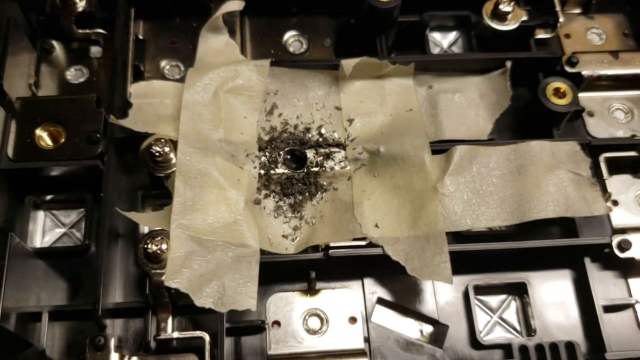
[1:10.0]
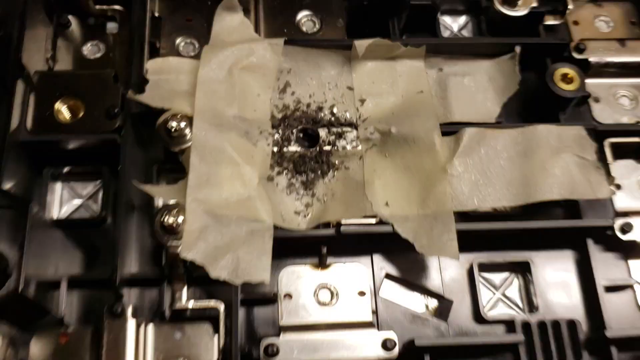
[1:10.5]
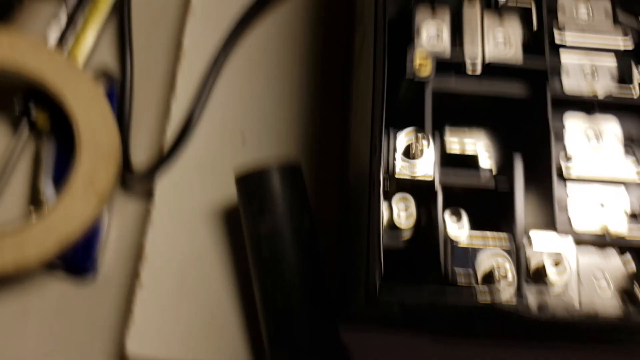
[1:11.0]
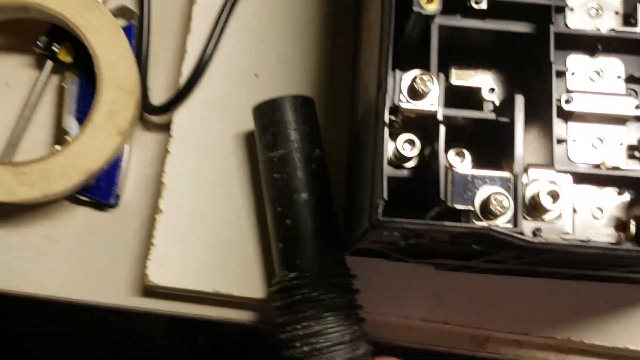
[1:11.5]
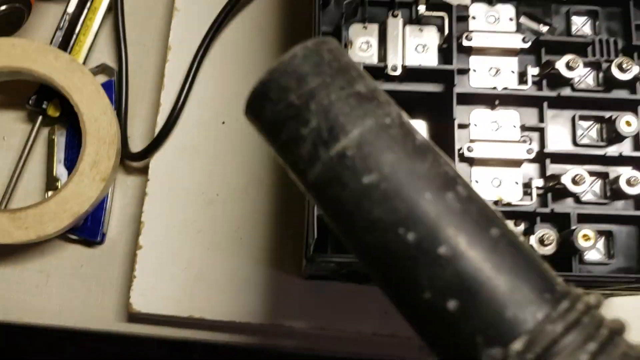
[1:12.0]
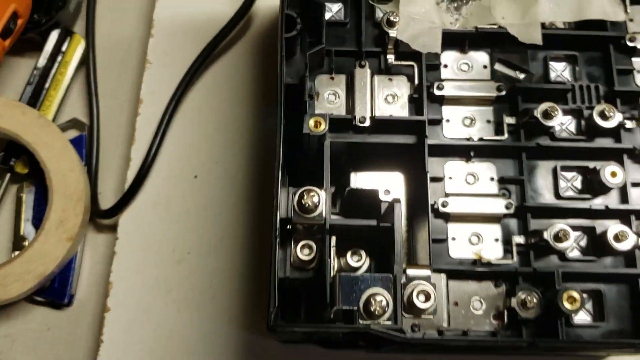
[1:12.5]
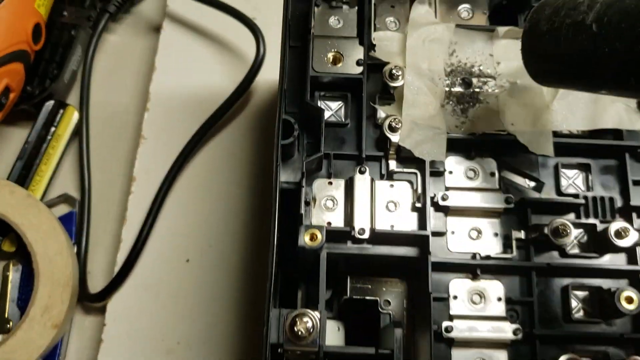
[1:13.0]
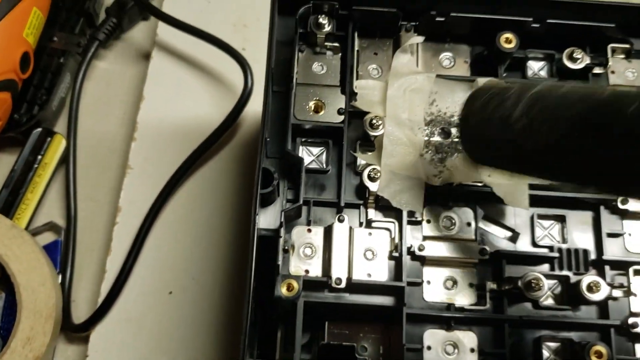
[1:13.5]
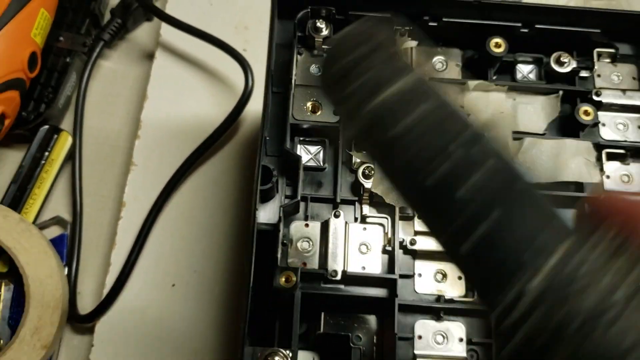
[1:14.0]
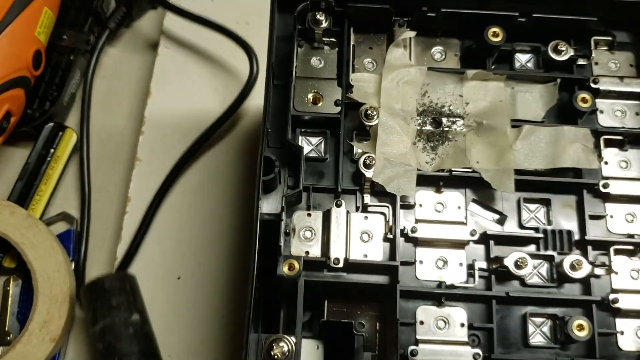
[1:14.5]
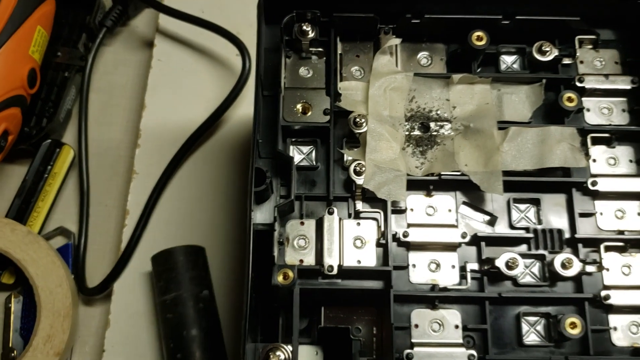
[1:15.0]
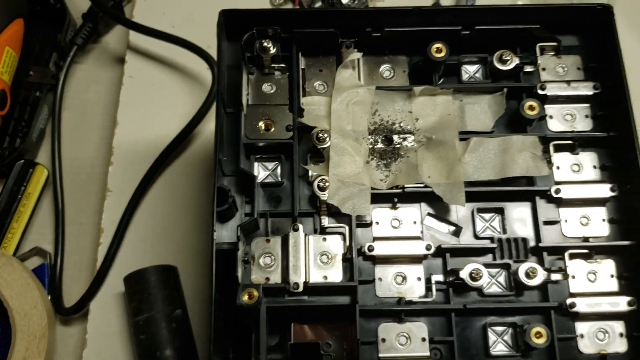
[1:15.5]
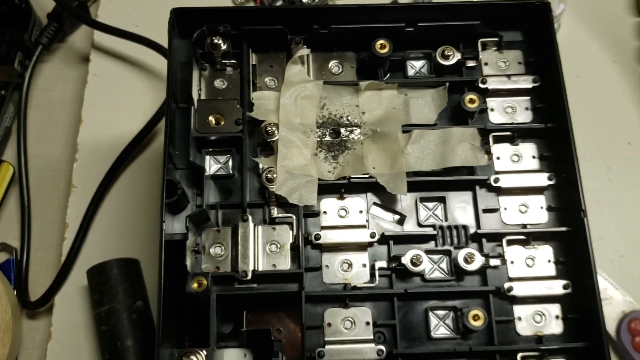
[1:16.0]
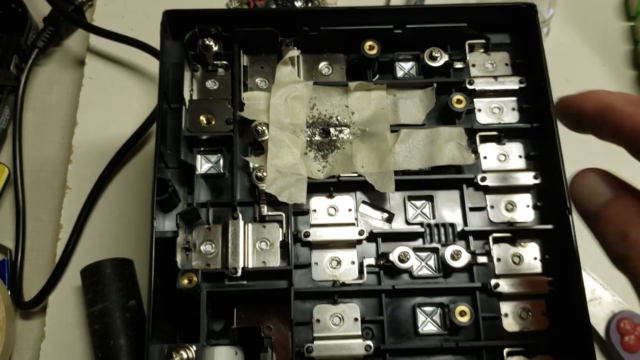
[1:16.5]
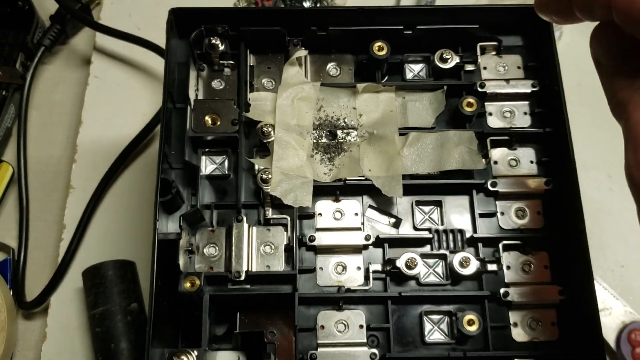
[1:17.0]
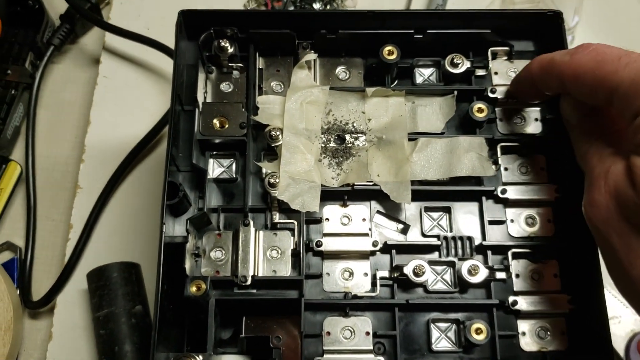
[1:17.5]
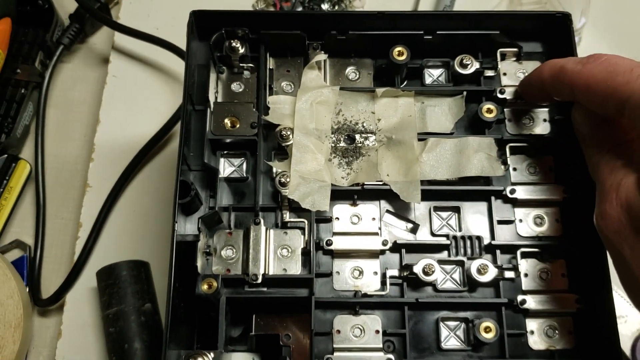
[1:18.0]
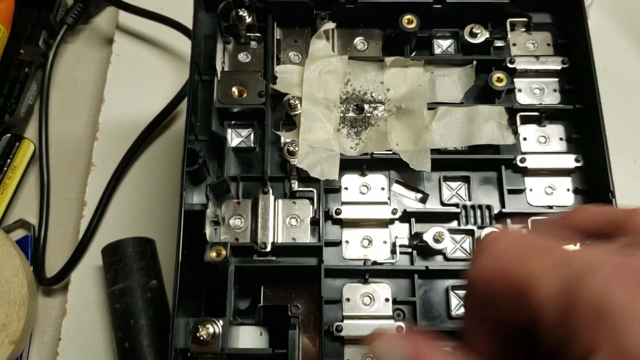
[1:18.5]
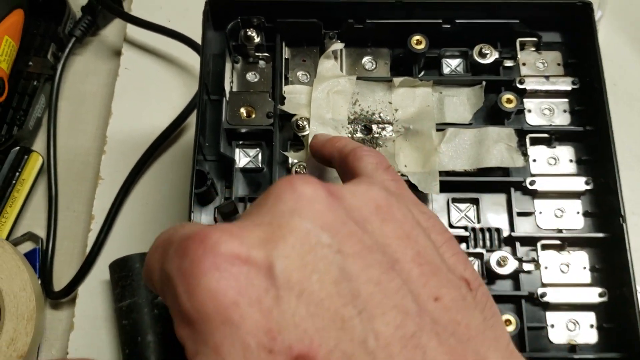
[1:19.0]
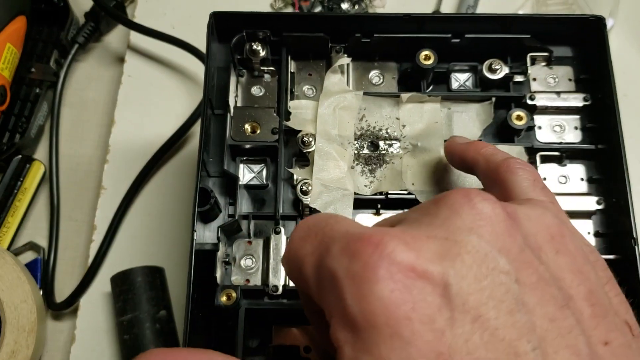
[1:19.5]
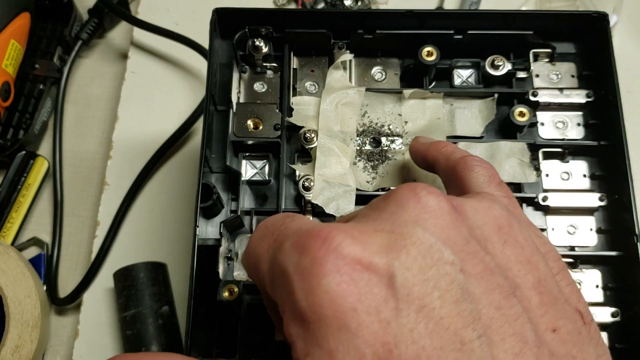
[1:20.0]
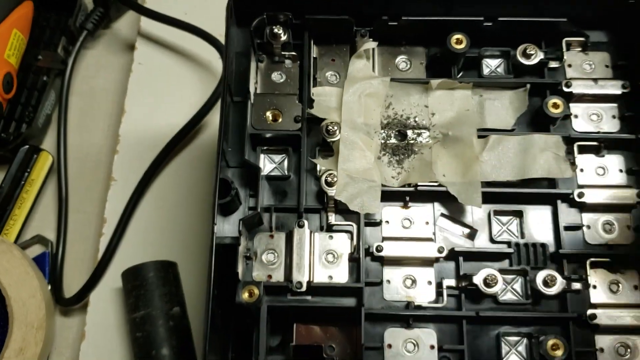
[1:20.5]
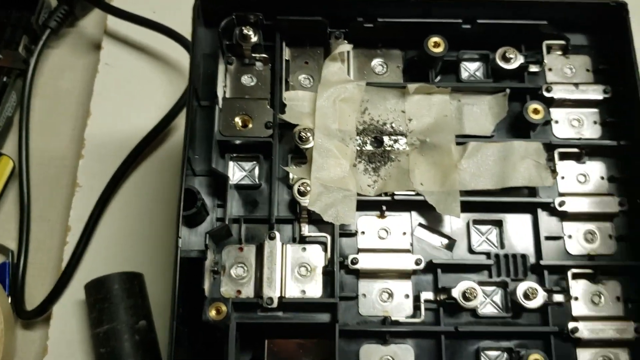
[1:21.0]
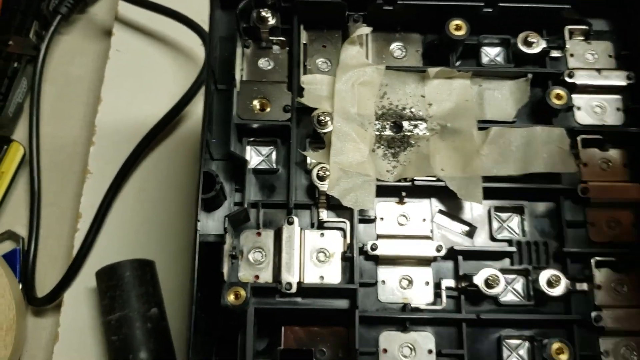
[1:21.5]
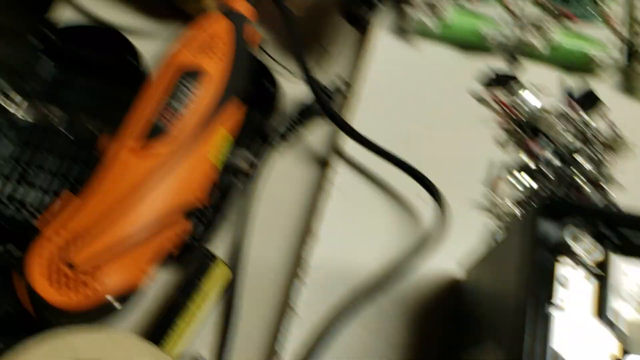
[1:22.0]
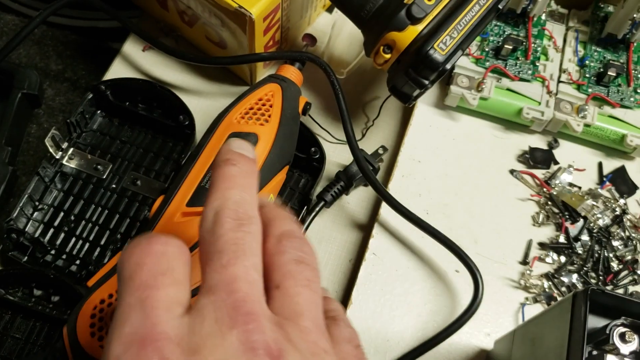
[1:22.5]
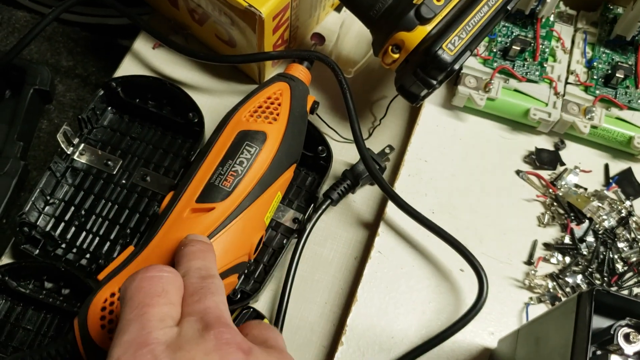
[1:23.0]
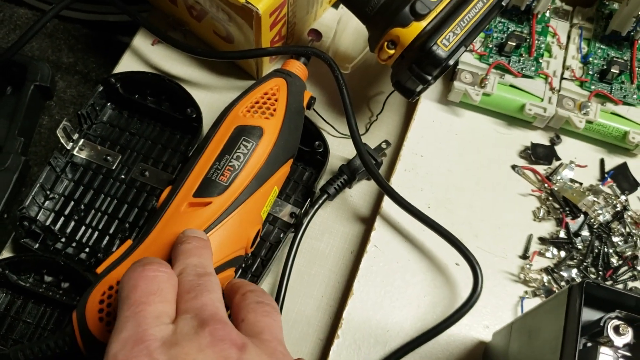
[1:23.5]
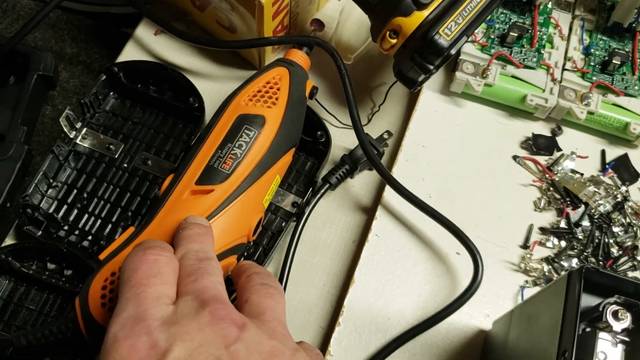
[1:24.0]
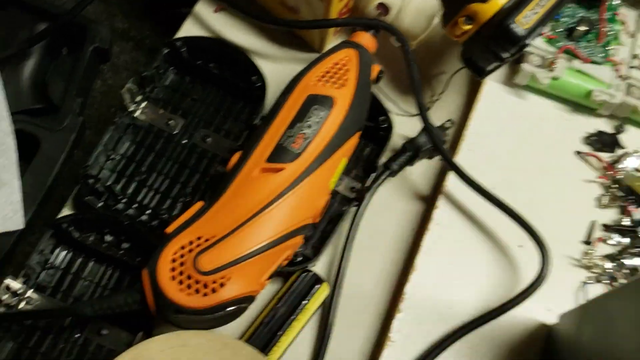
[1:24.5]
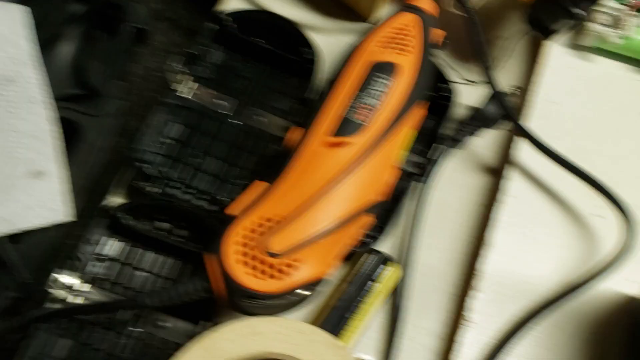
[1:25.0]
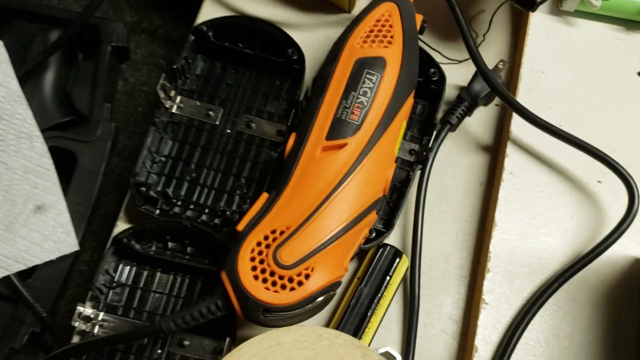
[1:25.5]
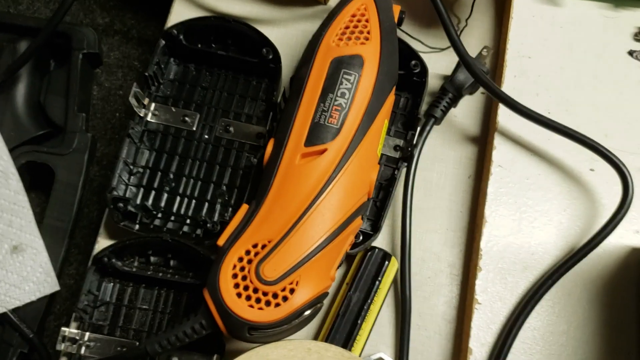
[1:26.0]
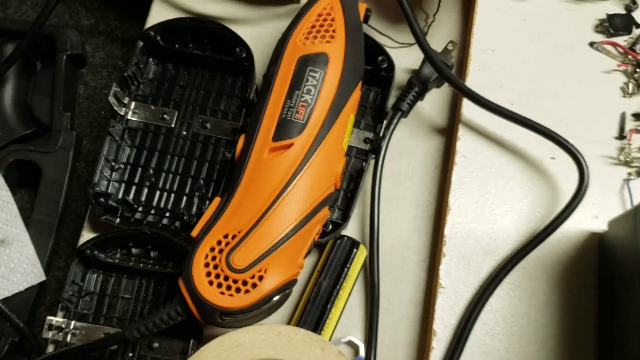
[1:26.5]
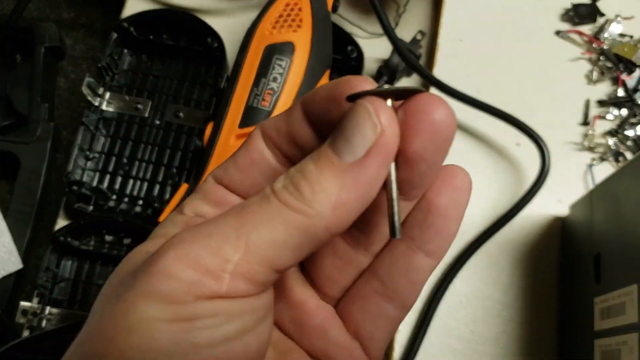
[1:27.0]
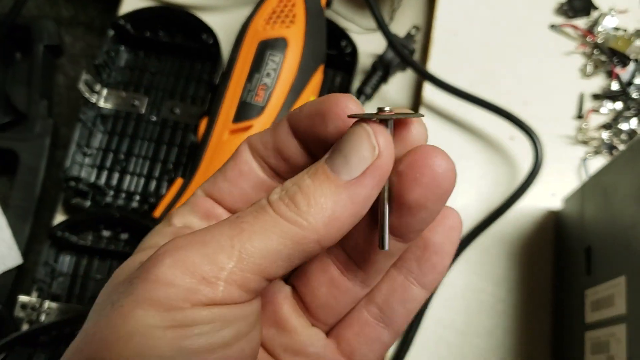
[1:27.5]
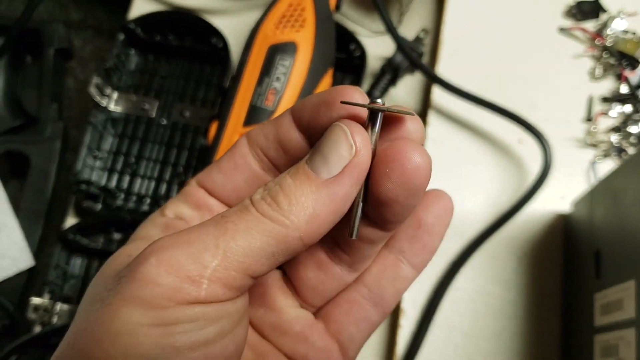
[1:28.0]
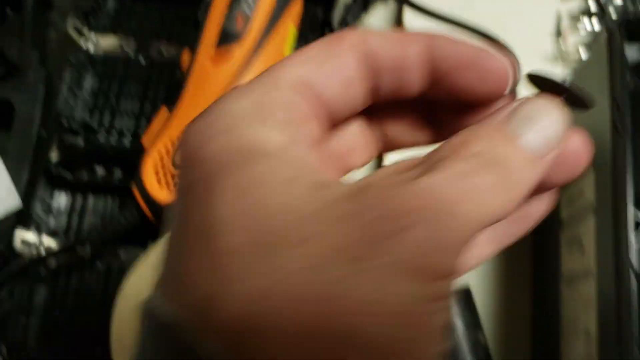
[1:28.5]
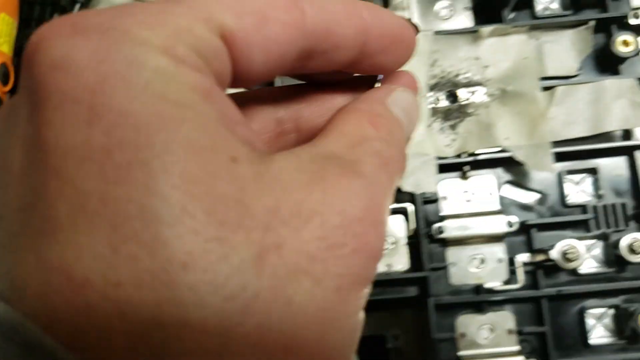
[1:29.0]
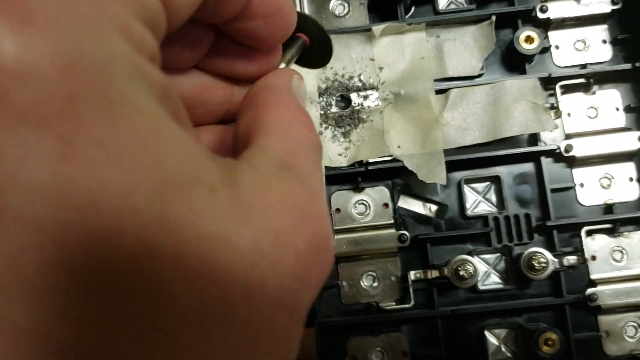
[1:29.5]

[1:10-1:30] A man, judging from the hands, appears to be using a vacuum cleaner on some of the dust, though the dust has not yet been removed. He points at another item that seems to be a multi-tool. Tape is on the item. None of the equipment is switched on, but he is showing how it is used. There is what looks like a little circular blade, apparently used with the multi-tool.